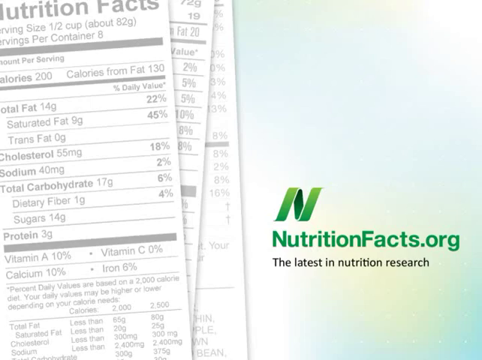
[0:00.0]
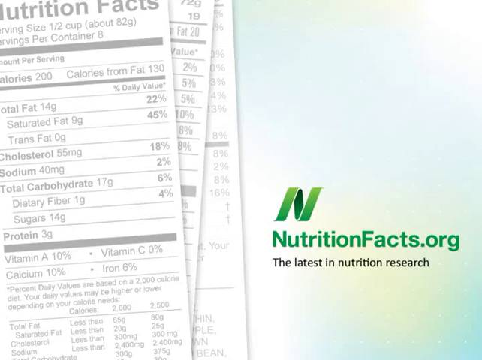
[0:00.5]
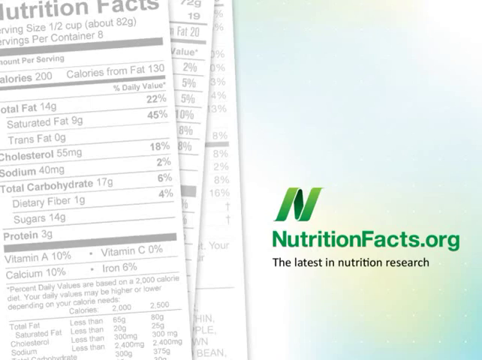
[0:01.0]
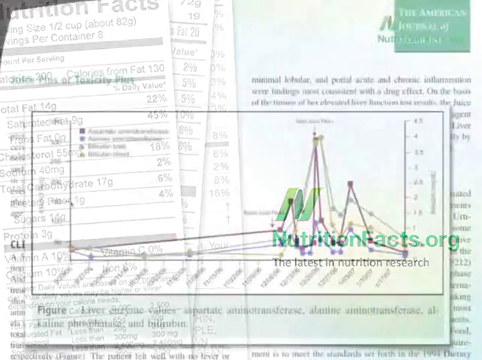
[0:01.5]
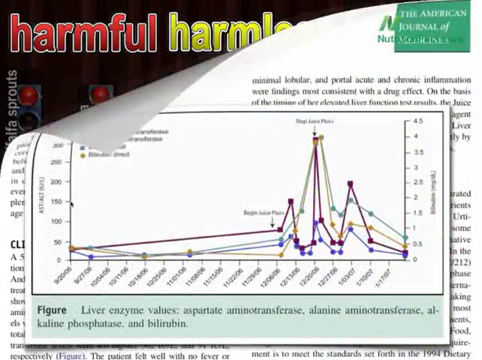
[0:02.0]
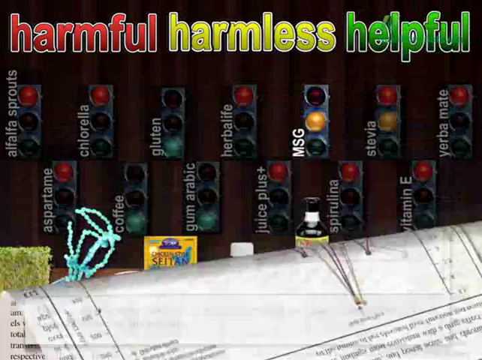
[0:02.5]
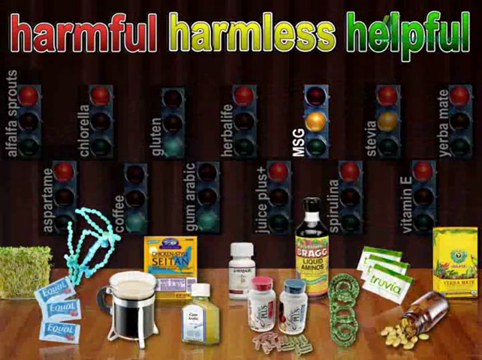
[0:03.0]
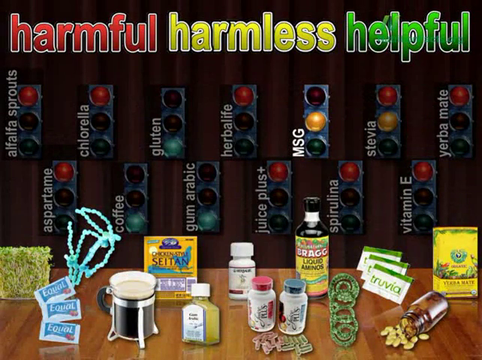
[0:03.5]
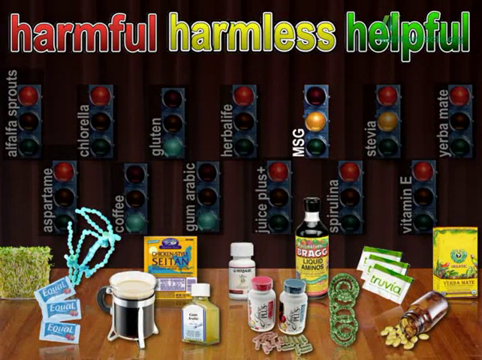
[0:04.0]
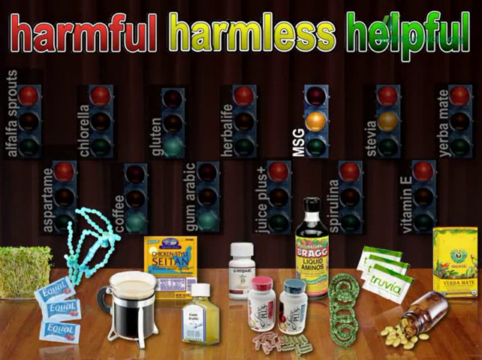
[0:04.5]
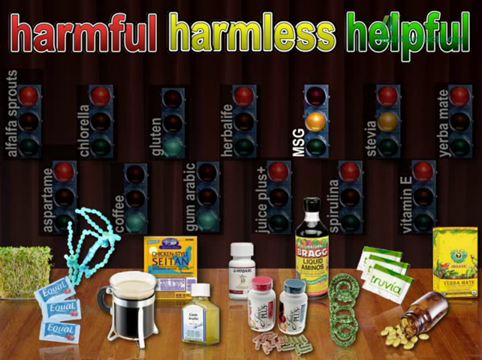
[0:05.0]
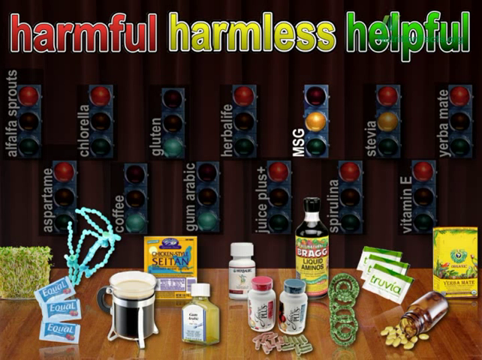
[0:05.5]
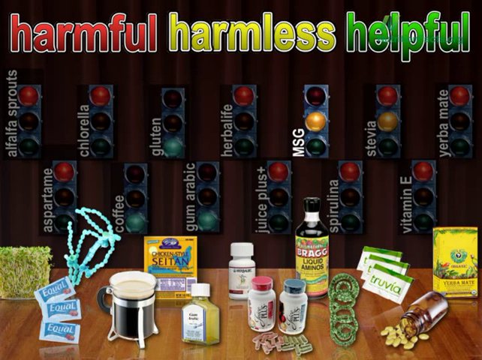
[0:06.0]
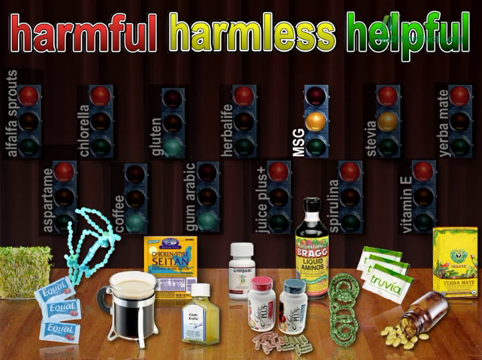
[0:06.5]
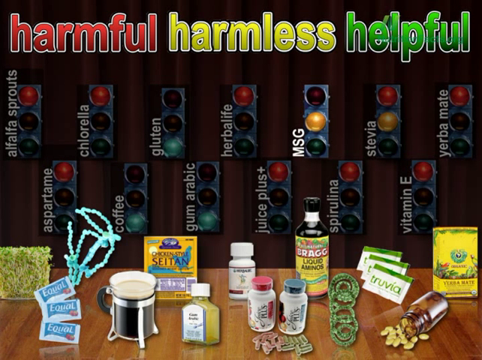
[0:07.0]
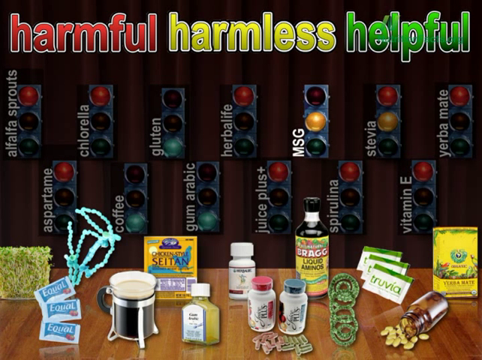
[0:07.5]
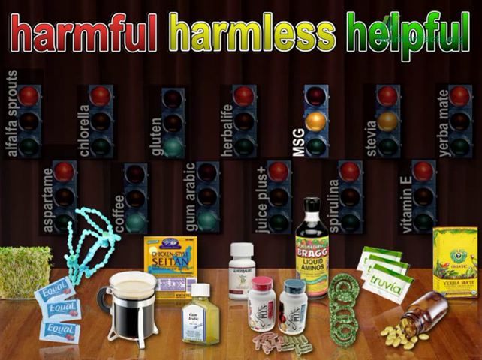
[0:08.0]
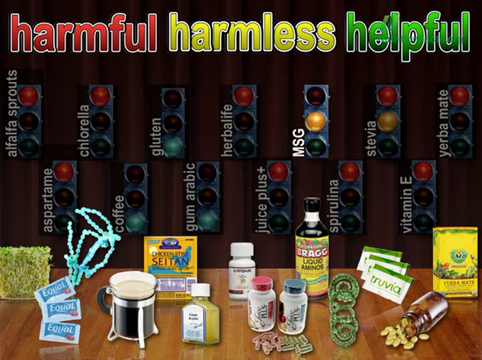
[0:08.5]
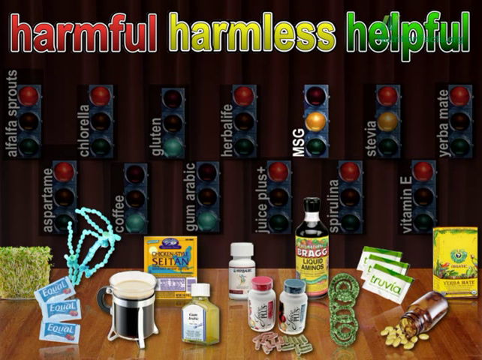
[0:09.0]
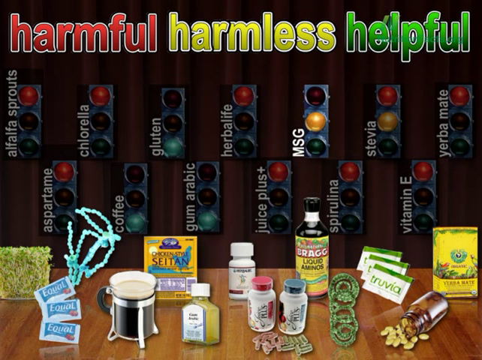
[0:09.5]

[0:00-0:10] This animated illustration of nutrition facts opens on an image of nutrition information. The information then rolls away downwards, revealing a screen with a black background and a title reading "Harmful, Harmless, Helpful", with "Harmful" written in red, "Harmless" in yellow and "Helpful" in green. All sorts of food ingredients and additives are displayed, including chlorella, gluten, Herbalife, MSG, stevia, yerba mate and others. At the bottom of the screen are bottles of supplements and sweeteners and other food products. The screen stays in view for a while. Each of the ingredients has what looks like a traffic light beside it, in the colours red, amber and yellow.